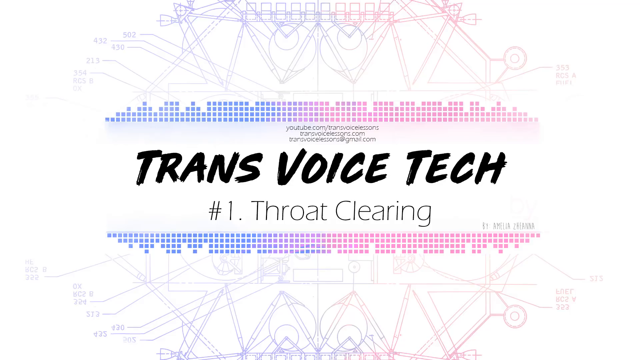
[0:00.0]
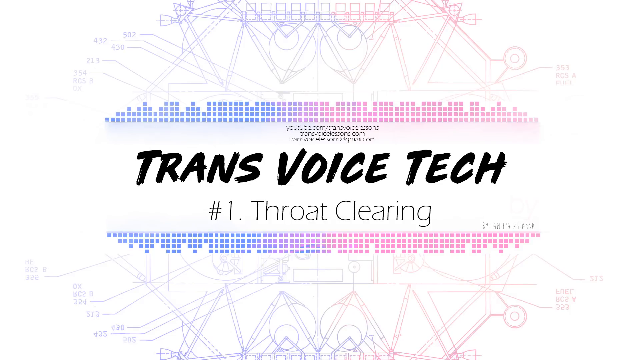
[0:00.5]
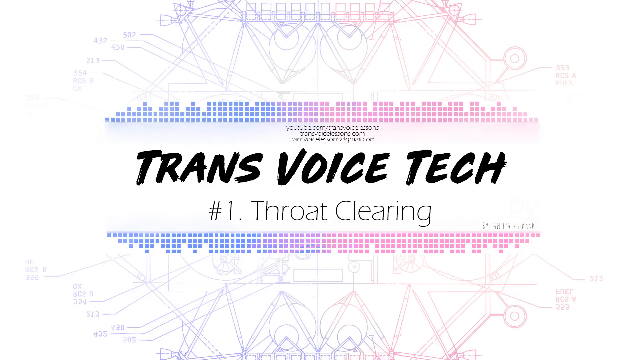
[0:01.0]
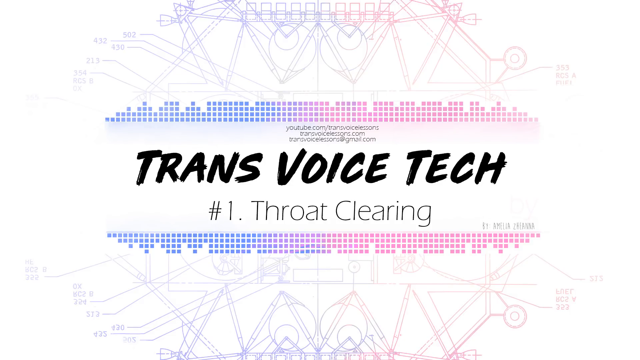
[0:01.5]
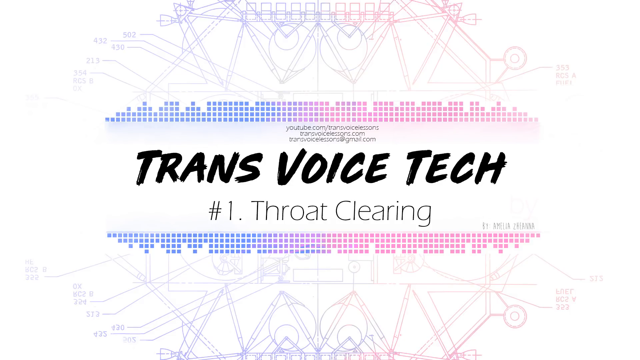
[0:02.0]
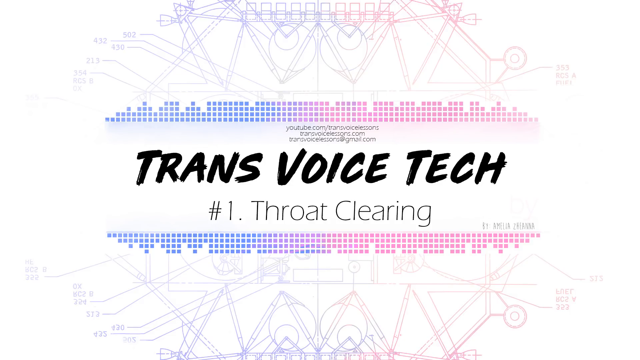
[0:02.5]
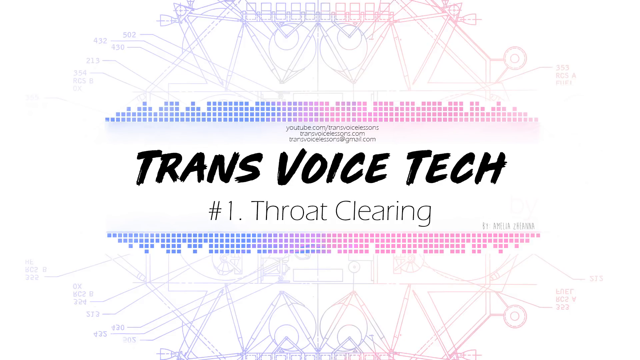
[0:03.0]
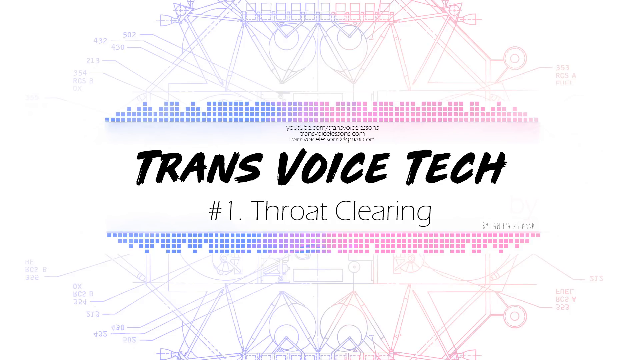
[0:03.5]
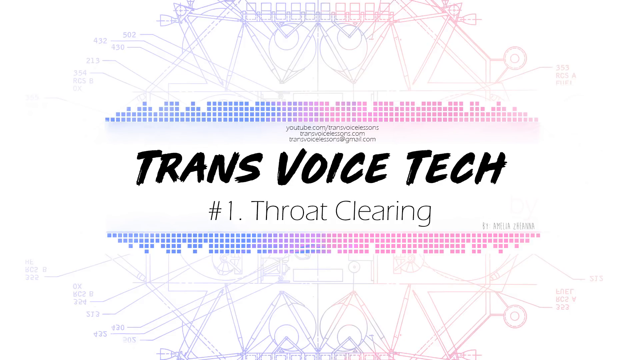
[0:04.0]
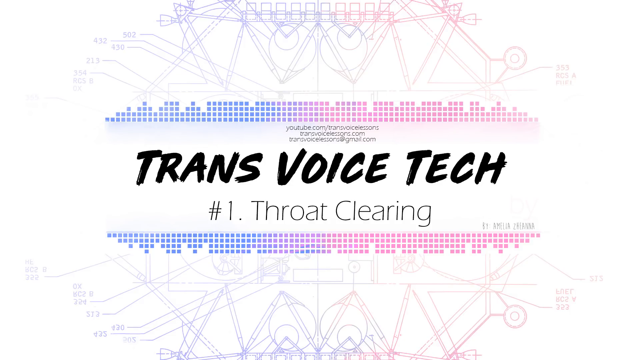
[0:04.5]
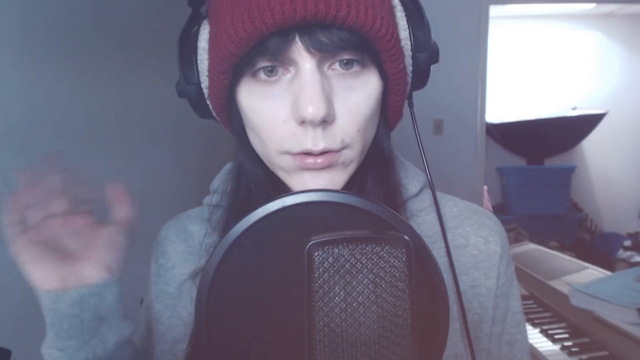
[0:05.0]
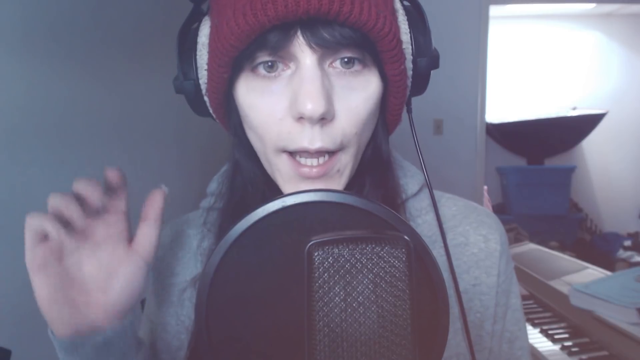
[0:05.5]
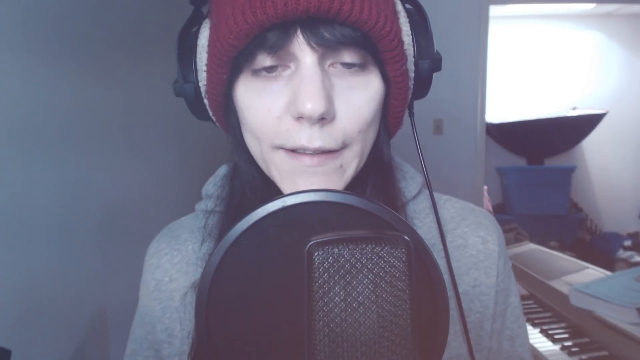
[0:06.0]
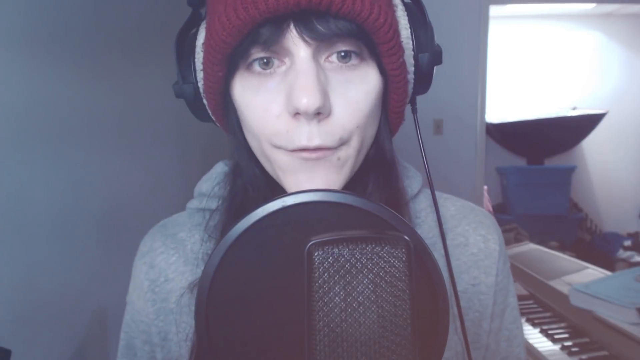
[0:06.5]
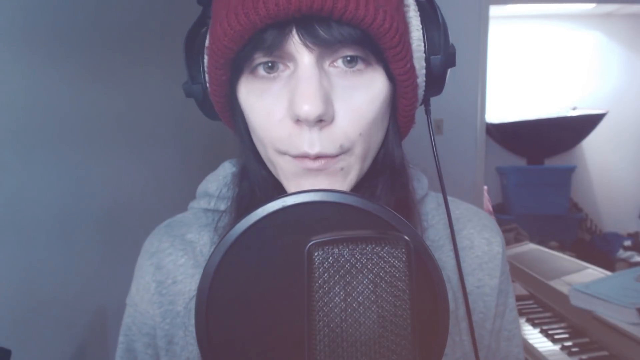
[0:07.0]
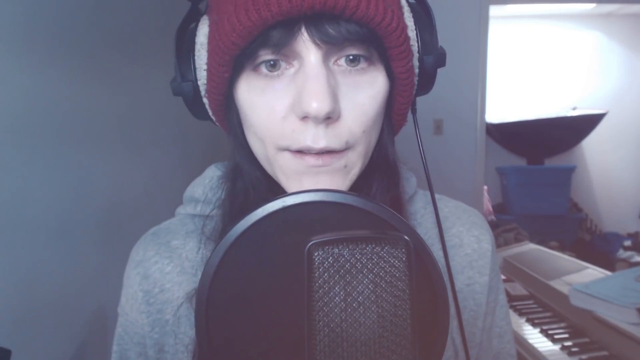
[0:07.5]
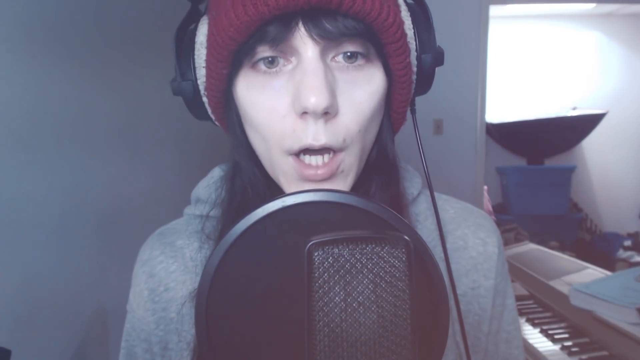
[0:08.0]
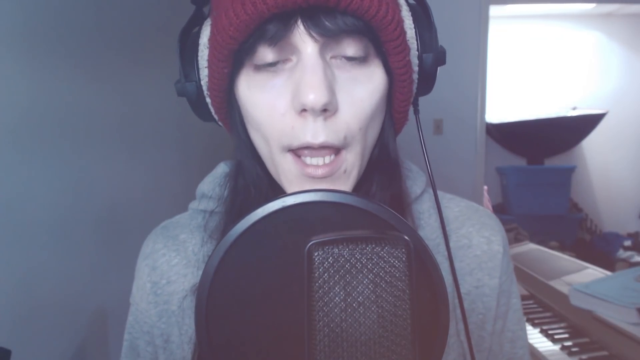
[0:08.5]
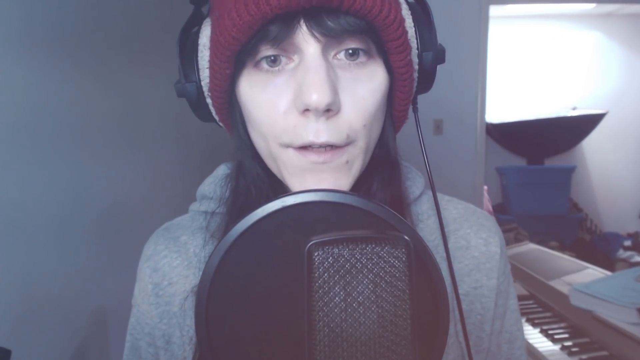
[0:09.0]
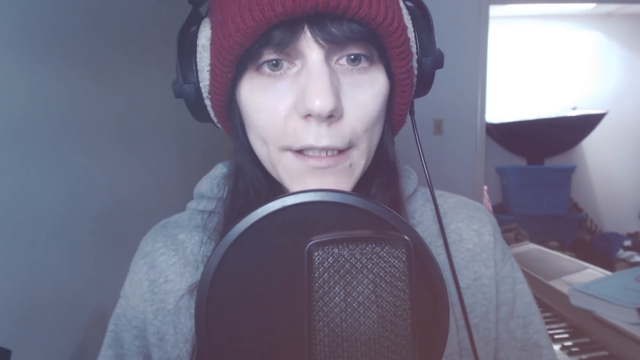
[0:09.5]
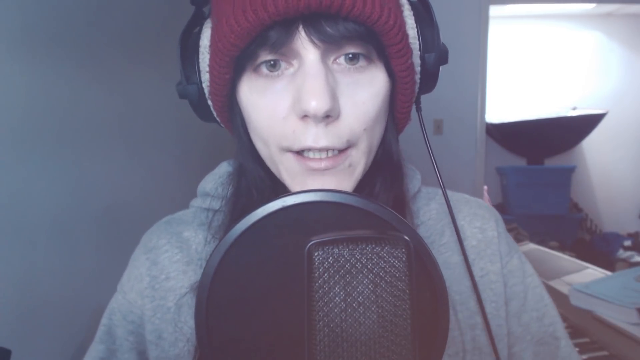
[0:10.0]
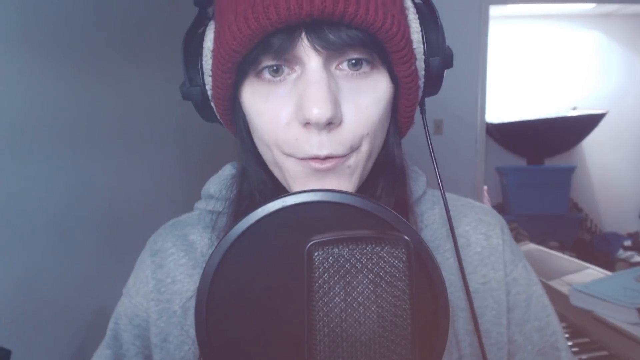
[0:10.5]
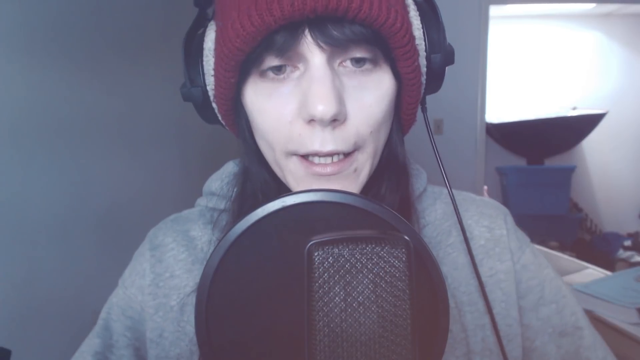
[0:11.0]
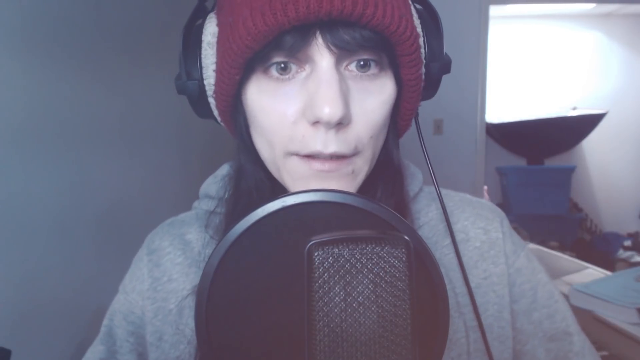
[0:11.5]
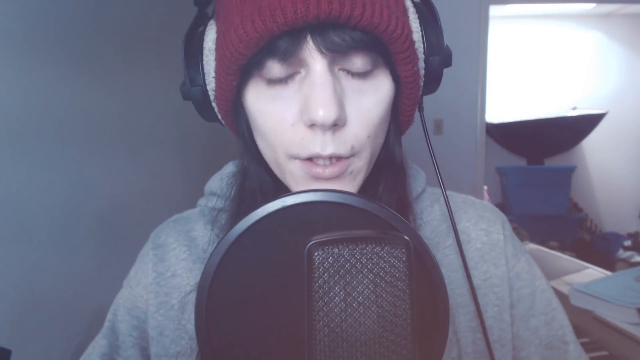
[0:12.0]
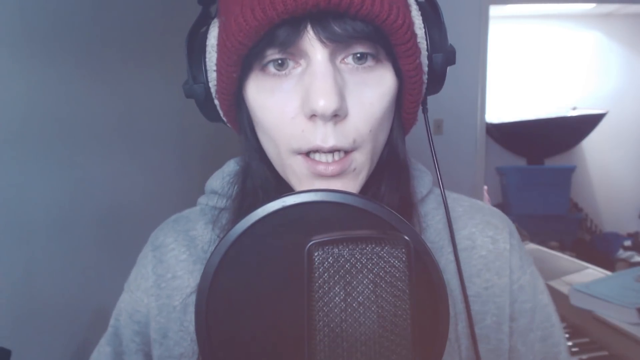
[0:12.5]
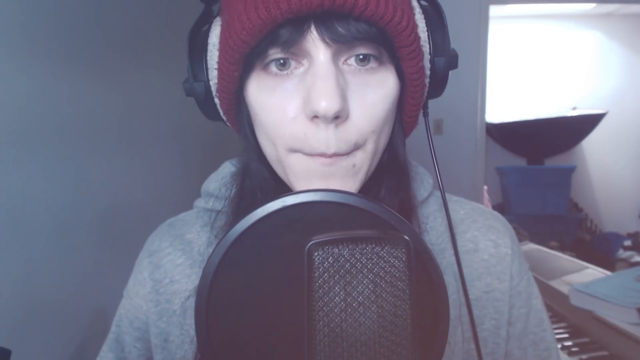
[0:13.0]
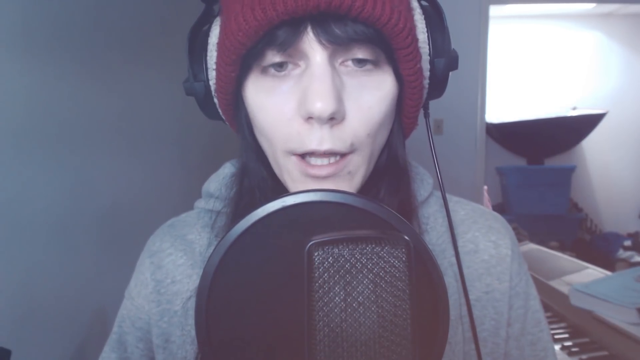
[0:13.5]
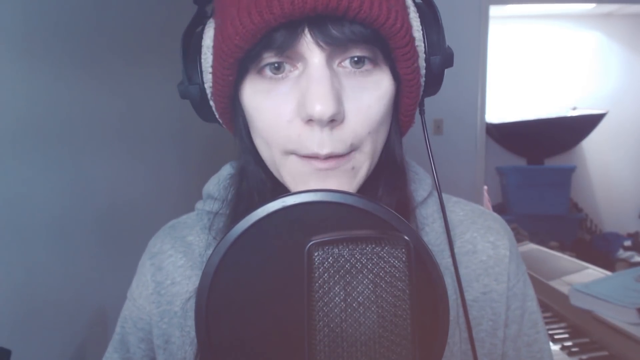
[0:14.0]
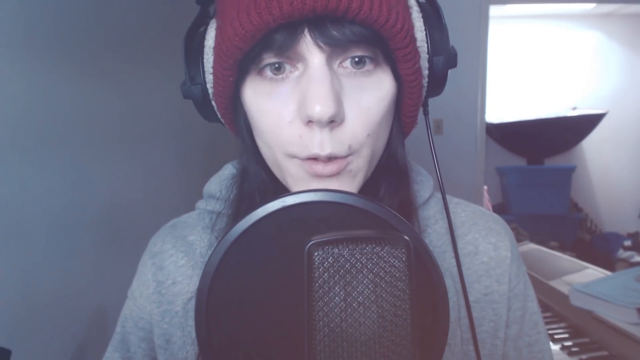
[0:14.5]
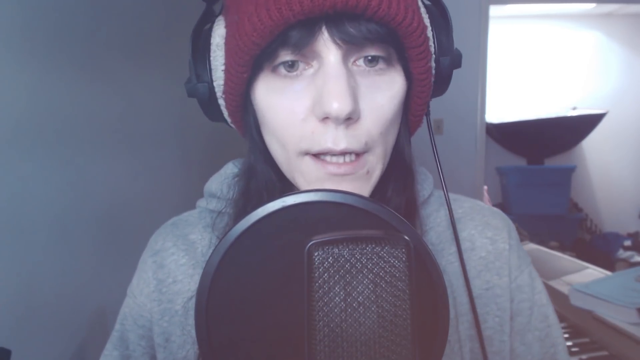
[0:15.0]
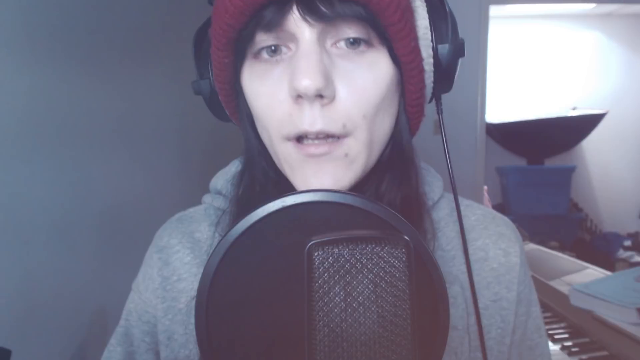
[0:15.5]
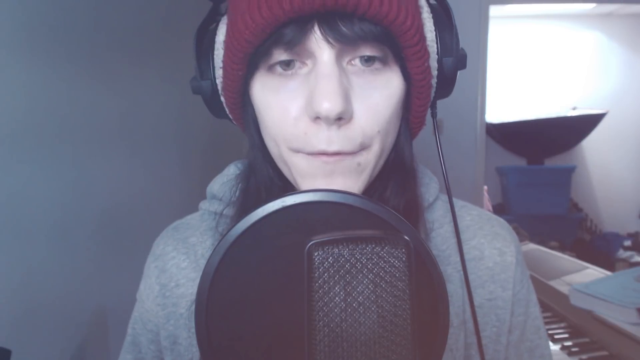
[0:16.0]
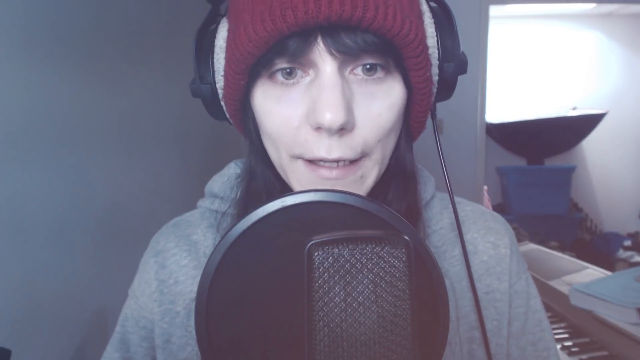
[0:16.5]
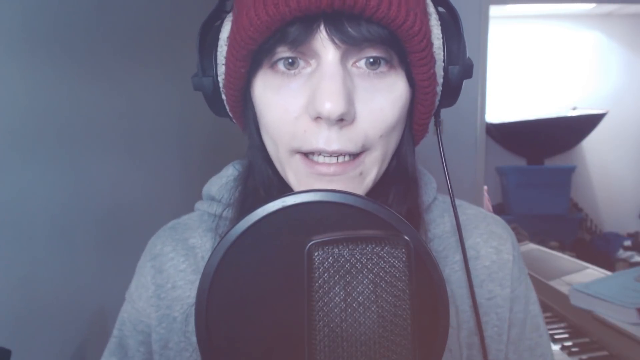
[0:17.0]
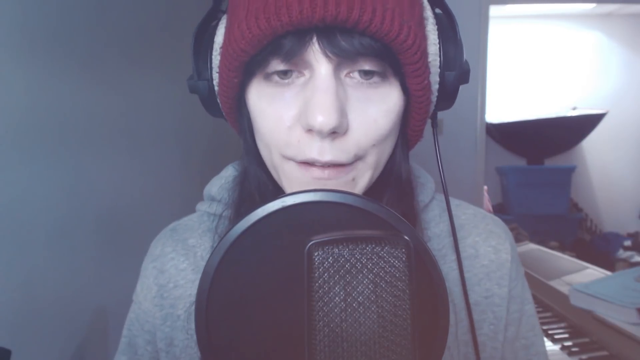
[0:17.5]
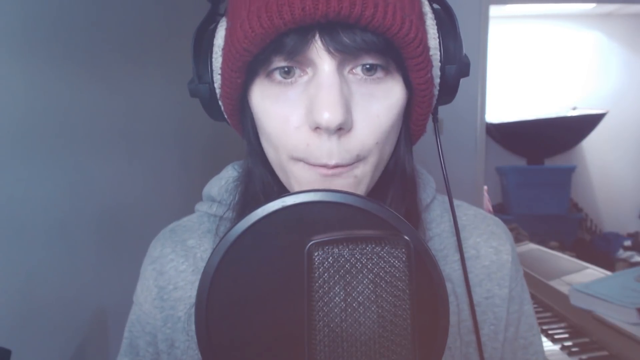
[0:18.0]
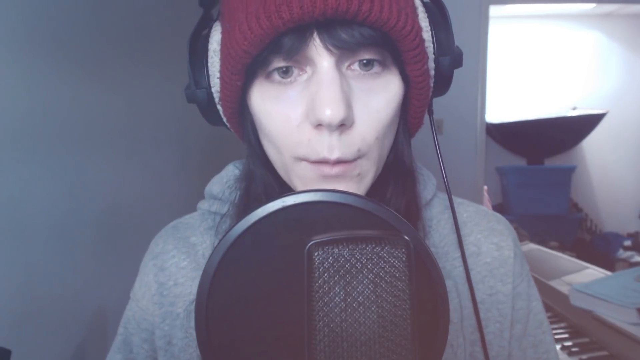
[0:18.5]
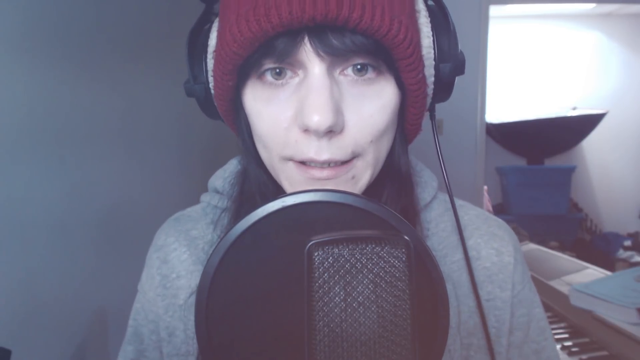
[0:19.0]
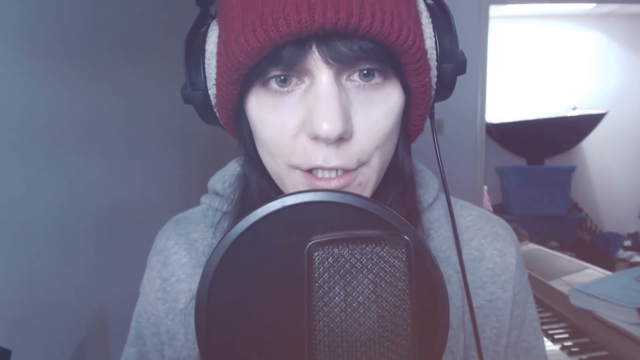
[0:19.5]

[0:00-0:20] A white background holds a blue picture of some tech design along with a pink design, and there are small blue and pink boxes. Bold black text reads "trans voice tech number one throat clearing." Links are also visible: "youtube.com/trans voice lessons," "trans voice lessons.com" and "trans voice lessons at gmail.com." Then a person, a man or a woman, appears wearing a red beanie, a pair of black headphones and a gray hoodie. A microphone is in front of them, and they talk into it. A large light is in the right corner of the screen along with some other stuff, and a white wall with a light switch is behind them. It looks like it might be winter or the colder months.